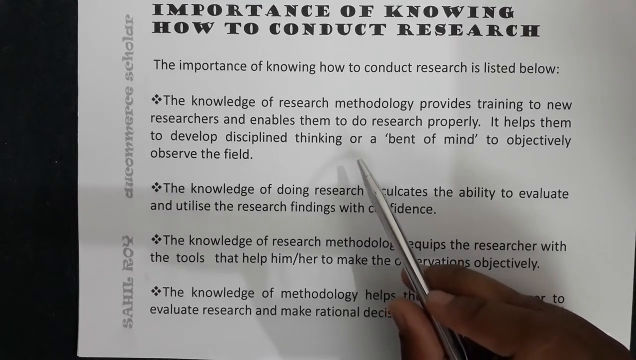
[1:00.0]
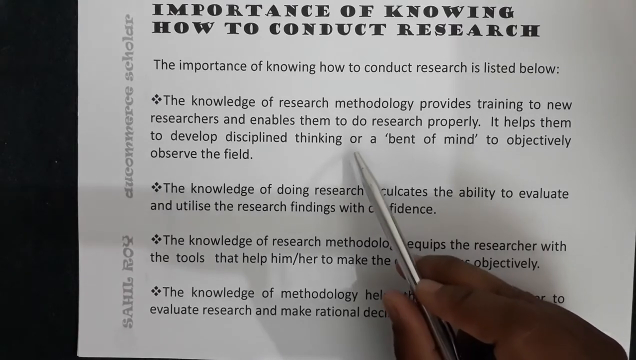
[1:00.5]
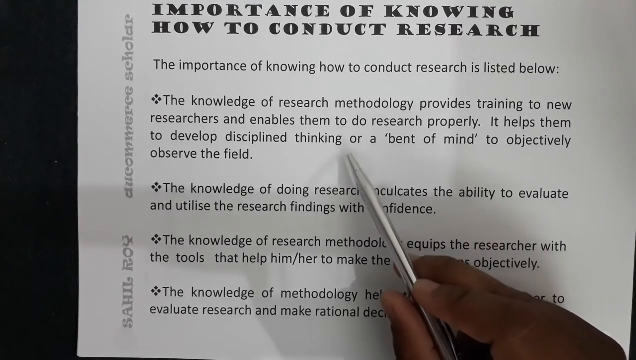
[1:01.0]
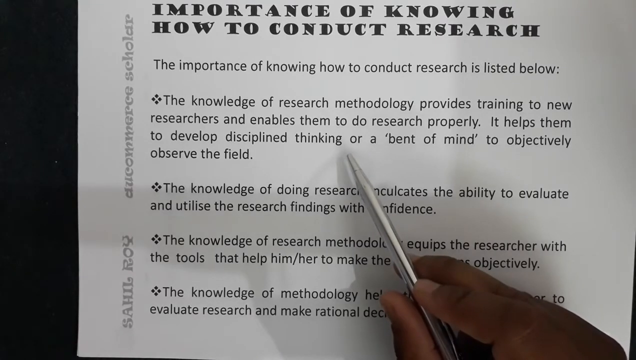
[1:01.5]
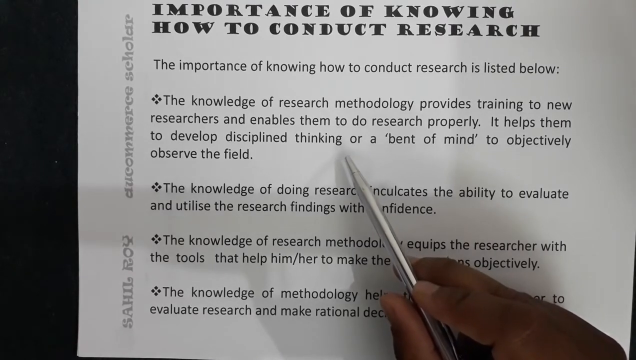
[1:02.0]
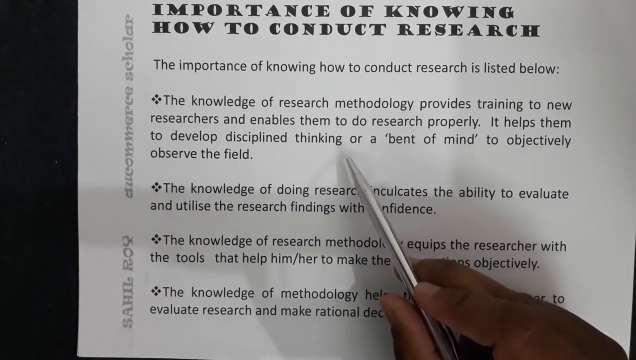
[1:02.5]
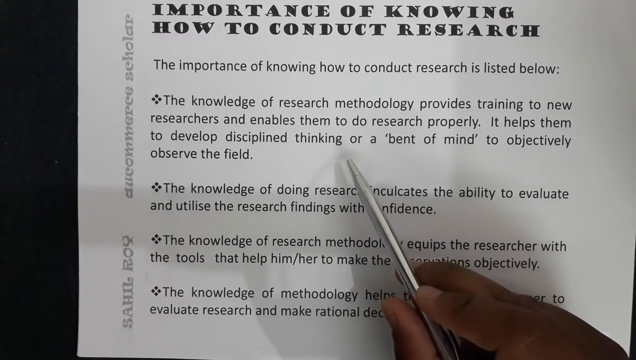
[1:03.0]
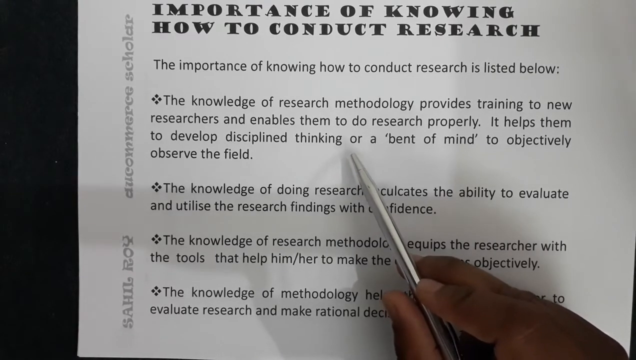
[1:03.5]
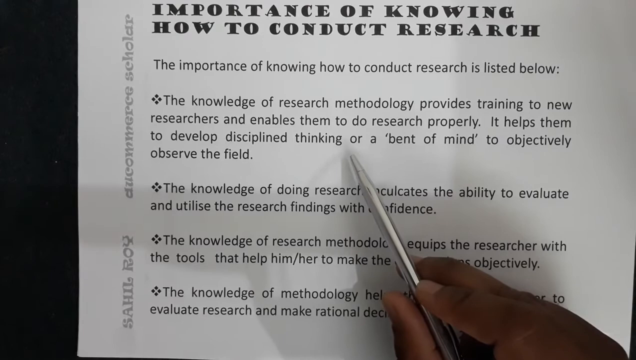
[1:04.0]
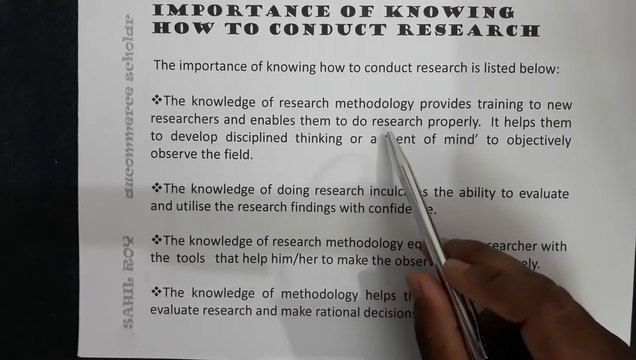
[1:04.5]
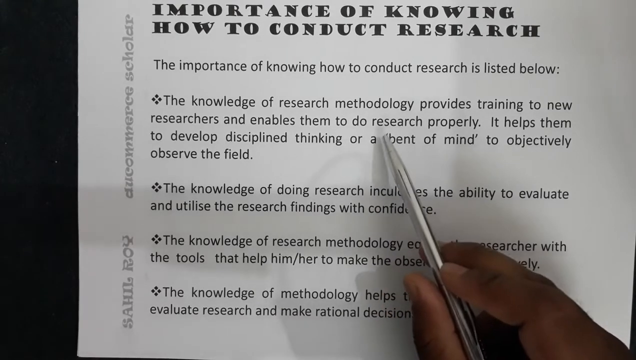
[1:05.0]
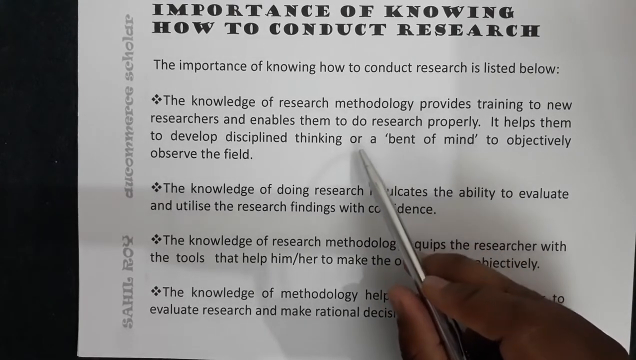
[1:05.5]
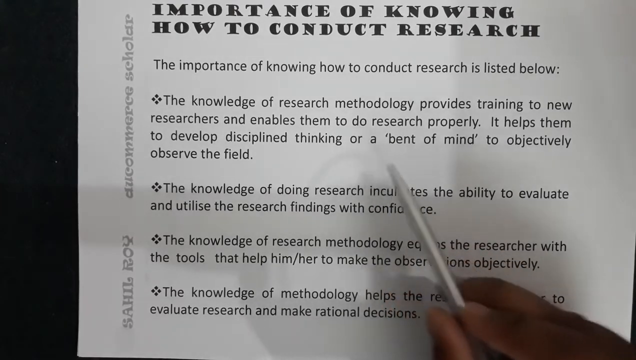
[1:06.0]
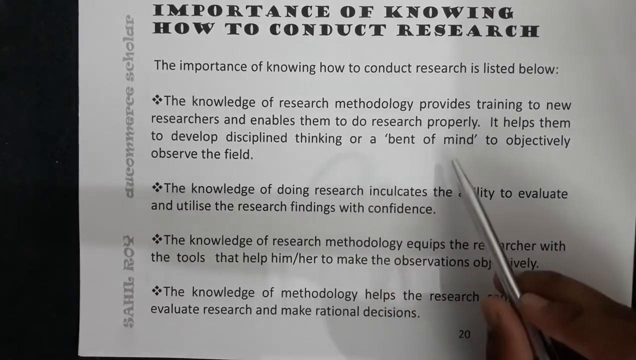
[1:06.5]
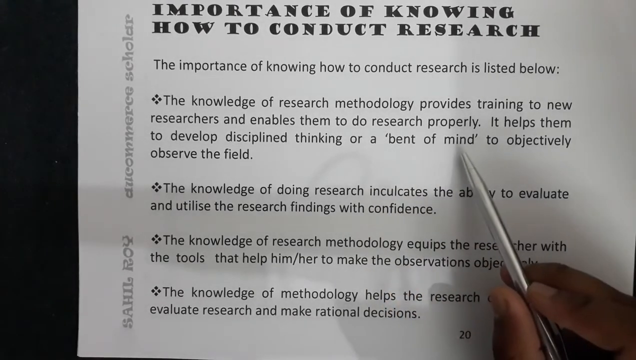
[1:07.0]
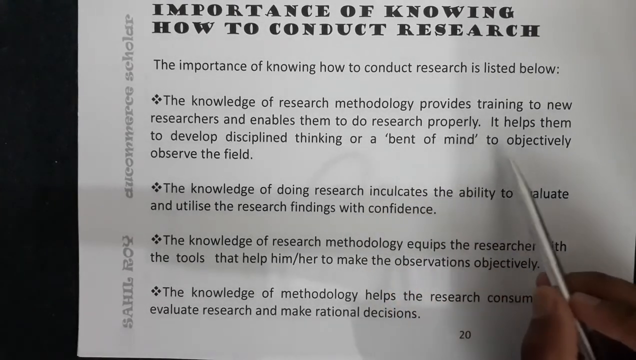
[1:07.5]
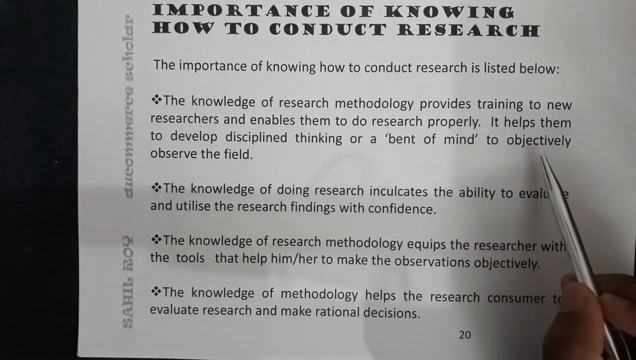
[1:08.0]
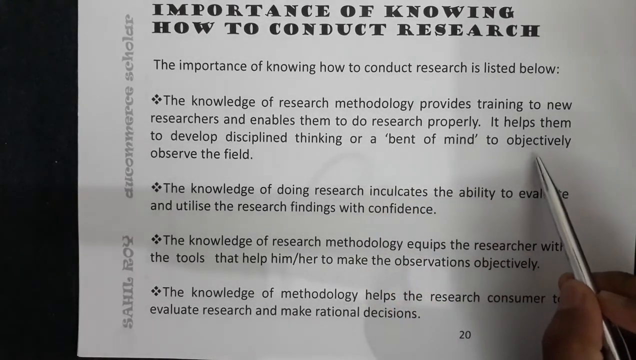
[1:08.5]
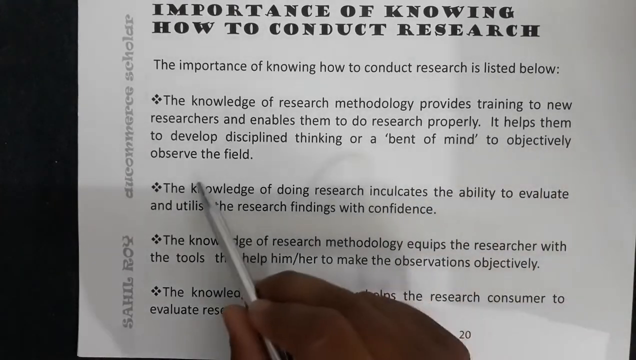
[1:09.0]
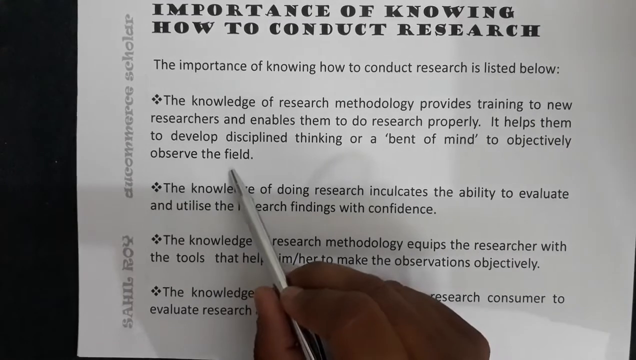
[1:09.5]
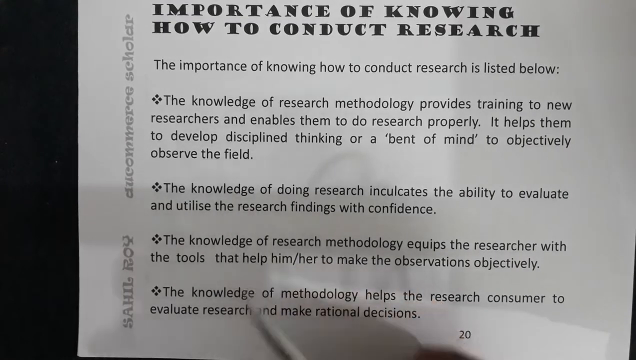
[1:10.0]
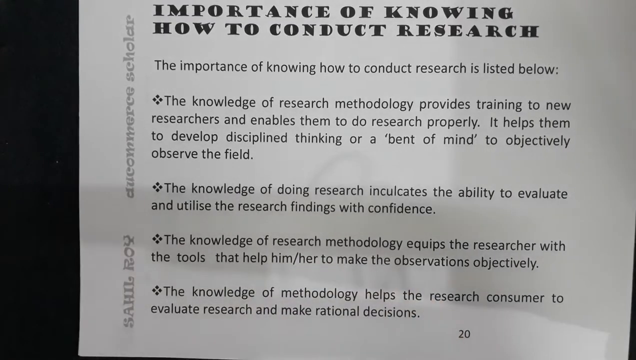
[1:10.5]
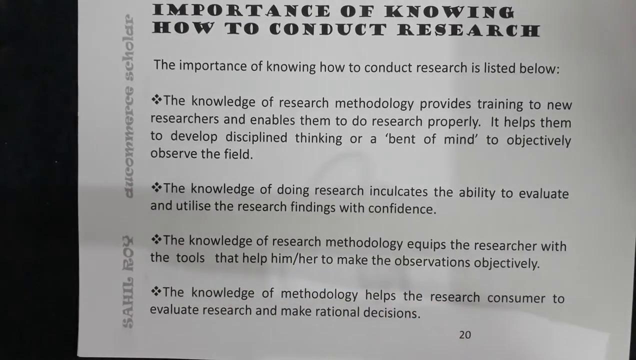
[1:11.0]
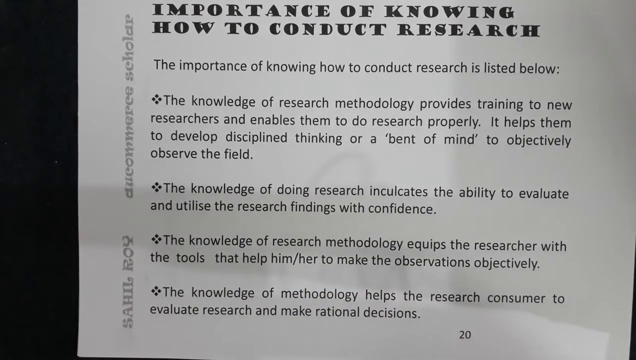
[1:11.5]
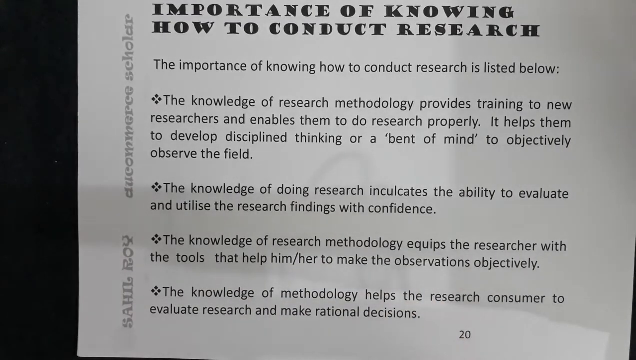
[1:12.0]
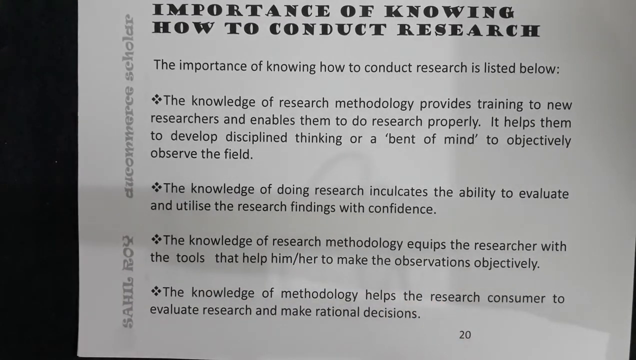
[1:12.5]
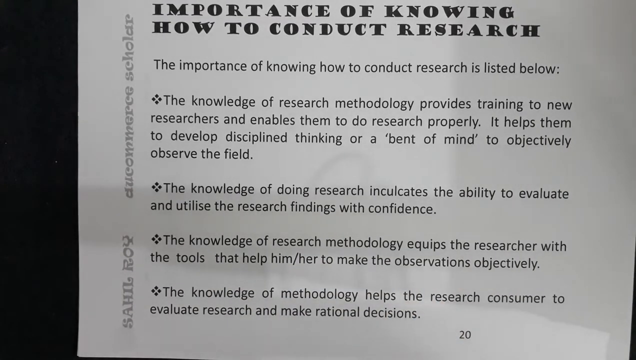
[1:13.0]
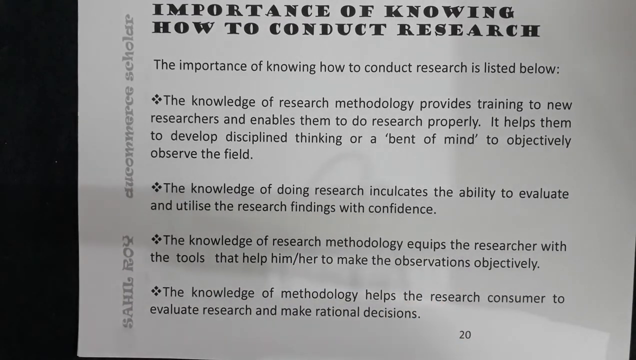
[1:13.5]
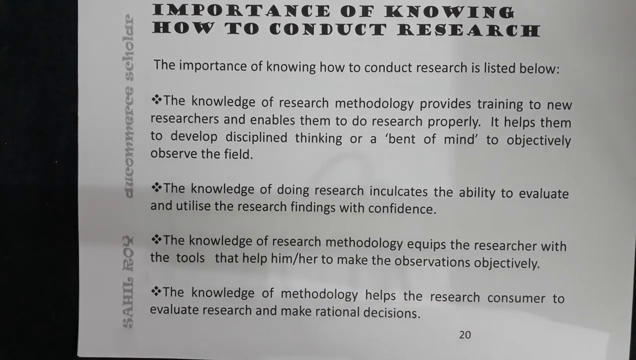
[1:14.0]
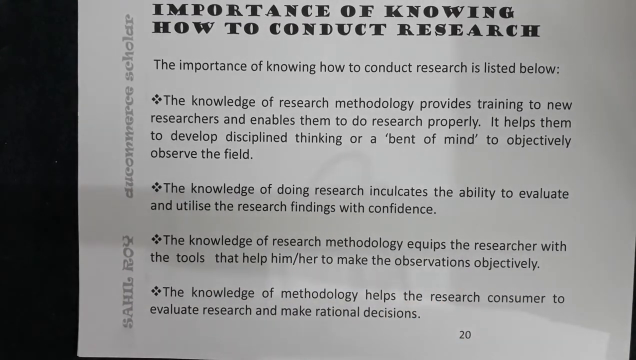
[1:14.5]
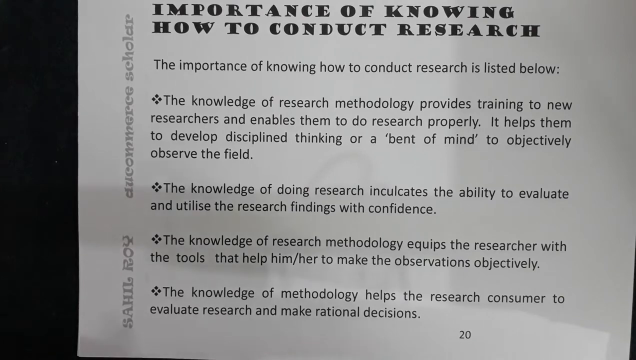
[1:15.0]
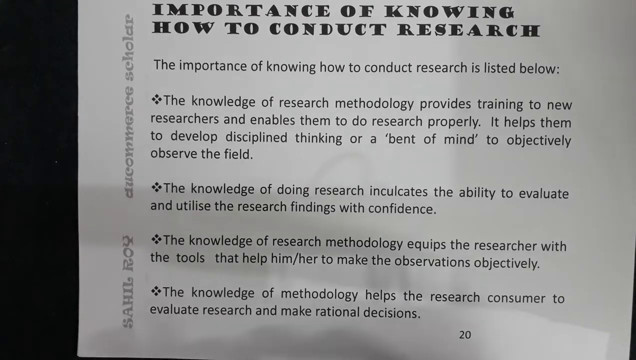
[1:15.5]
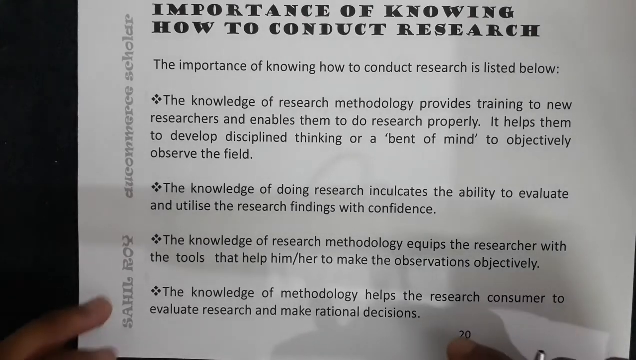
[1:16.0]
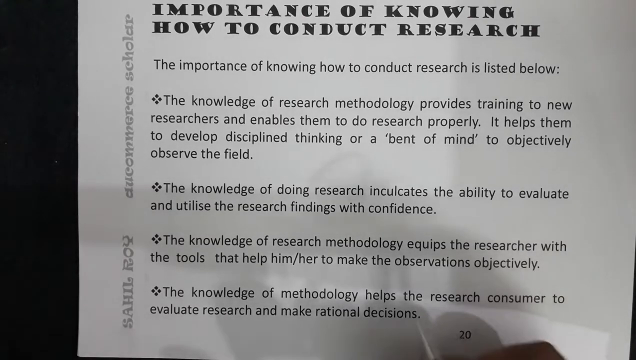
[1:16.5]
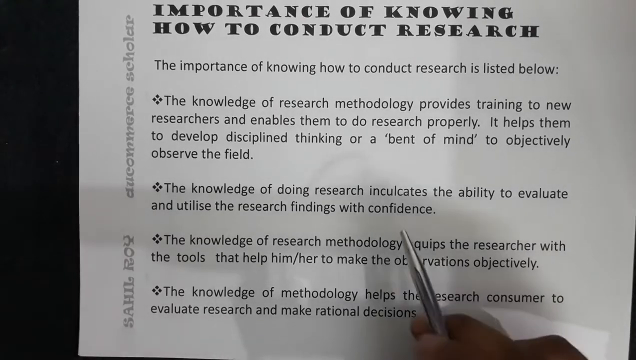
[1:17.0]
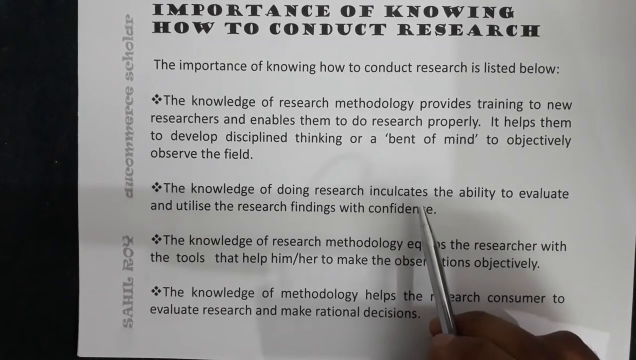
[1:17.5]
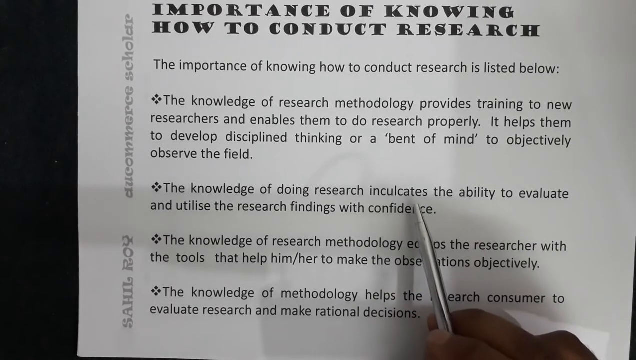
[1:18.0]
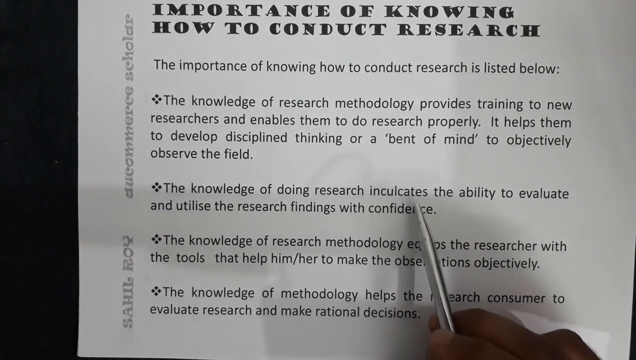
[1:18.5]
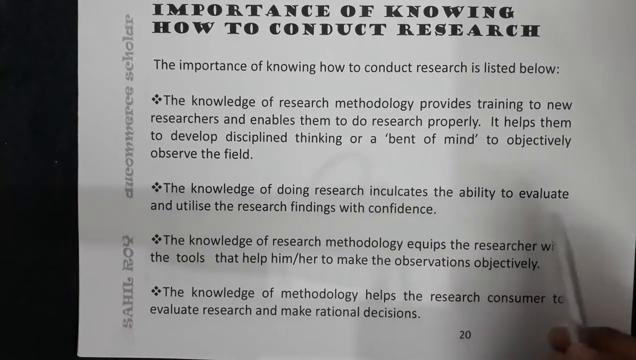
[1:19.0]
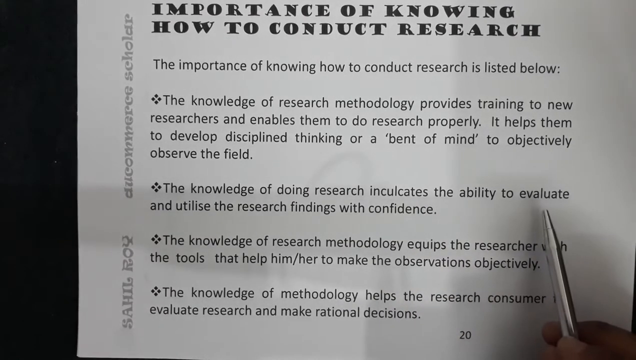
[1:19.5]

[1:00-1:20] A person holds a silver pen over a piece of paper. At the top, in bold text, the paper reads "importance of knowing how to conduct research." Below that, in smaller, non-bold text, the bullet points begin with "the knowledge of research methodology provides training to new researchers enables them to do research properly, helps them to develop discipline thinking or a bent of mind to objectively observe the field." The last bullet point reads "the knowledge of the methodology helps a research consumer to evaluate research and make rational decisions." The person hovering over the sheet seems to be pointing out different things across it with the silver pen.